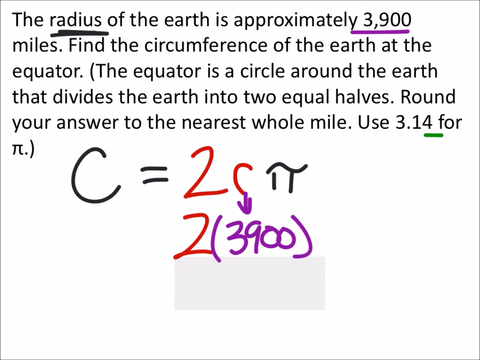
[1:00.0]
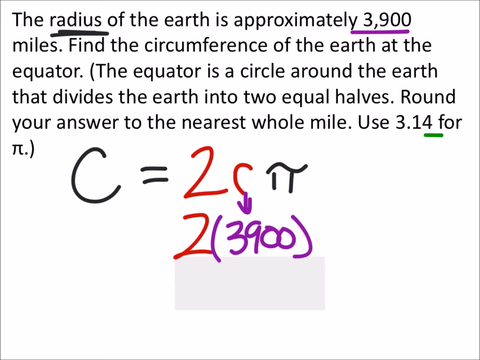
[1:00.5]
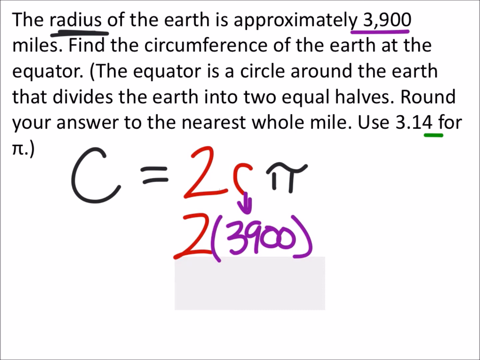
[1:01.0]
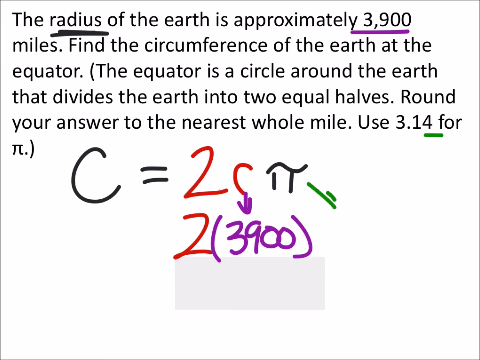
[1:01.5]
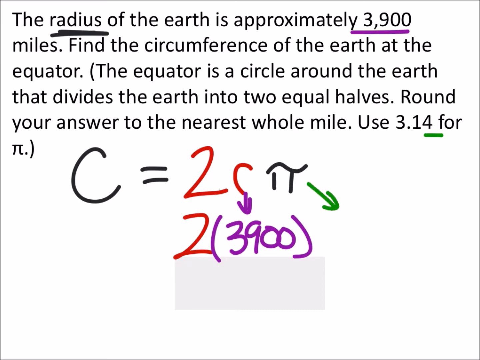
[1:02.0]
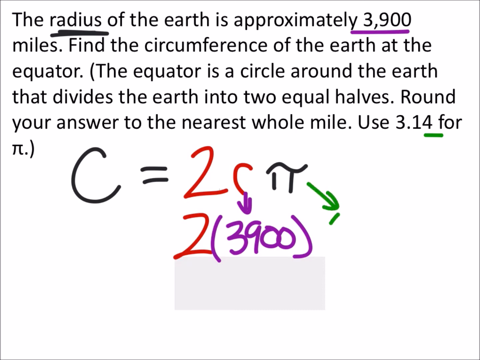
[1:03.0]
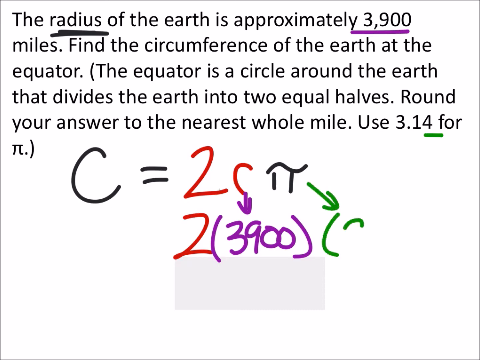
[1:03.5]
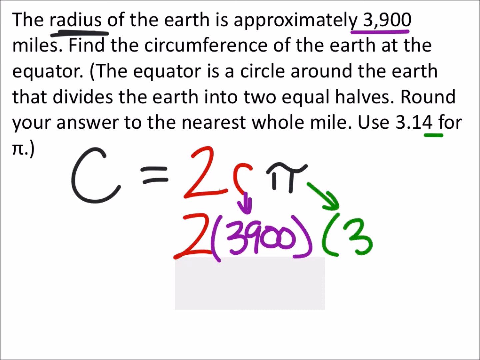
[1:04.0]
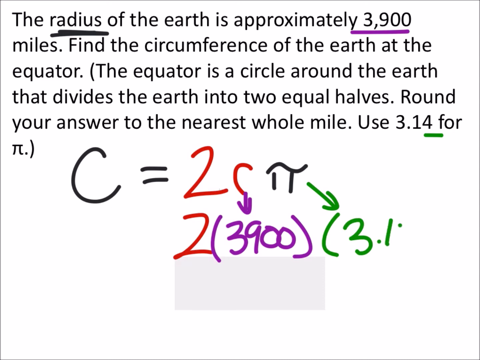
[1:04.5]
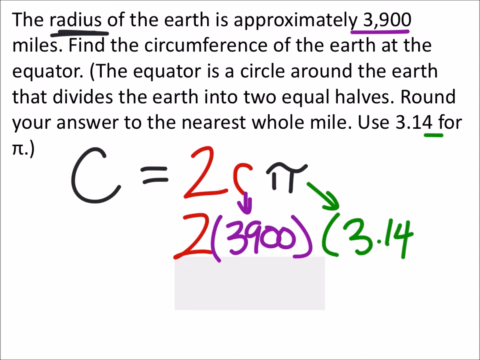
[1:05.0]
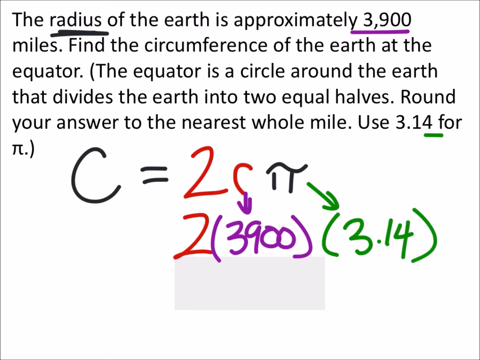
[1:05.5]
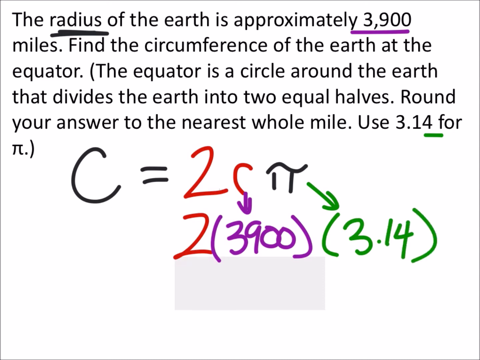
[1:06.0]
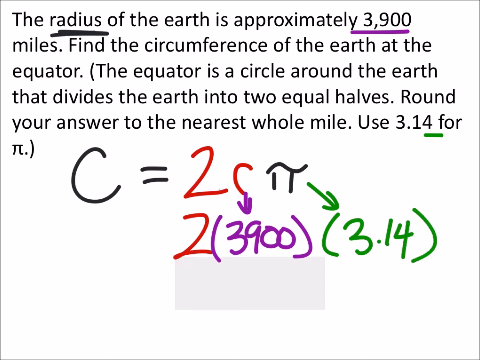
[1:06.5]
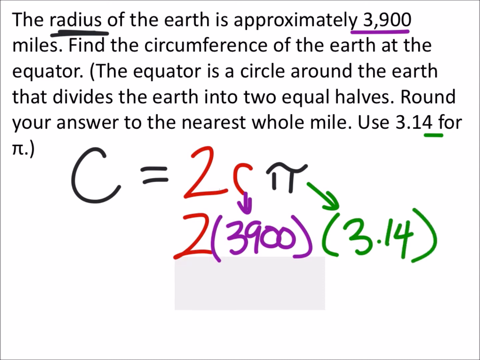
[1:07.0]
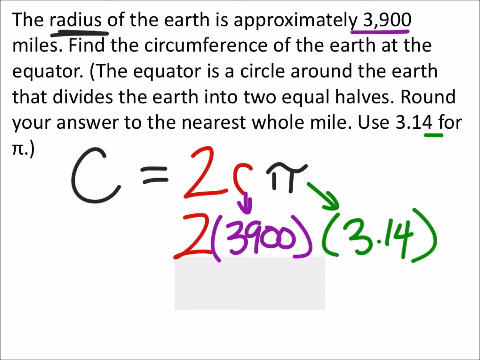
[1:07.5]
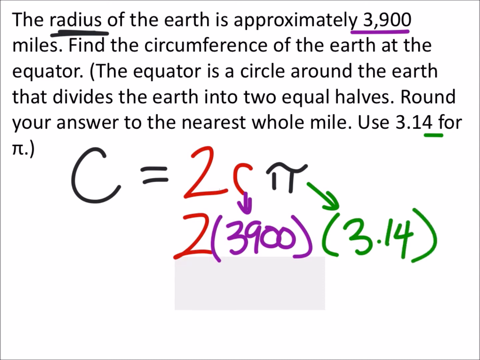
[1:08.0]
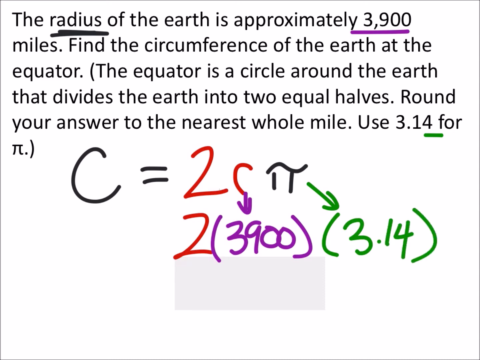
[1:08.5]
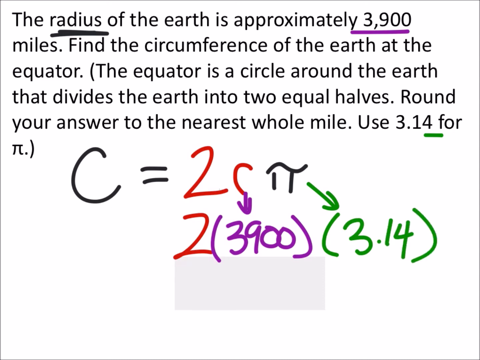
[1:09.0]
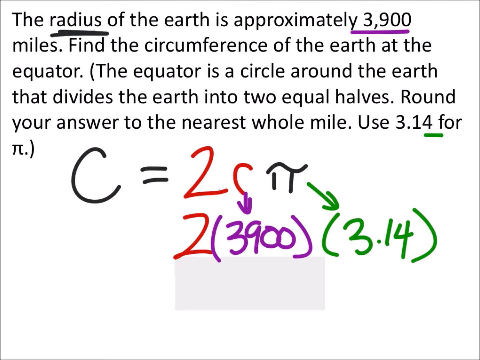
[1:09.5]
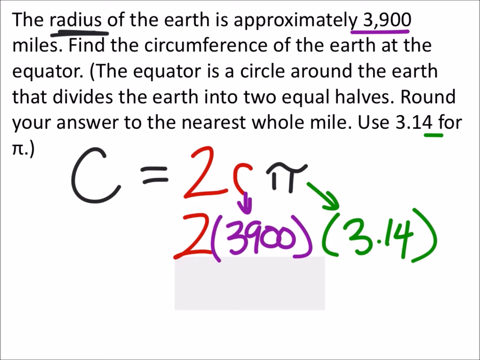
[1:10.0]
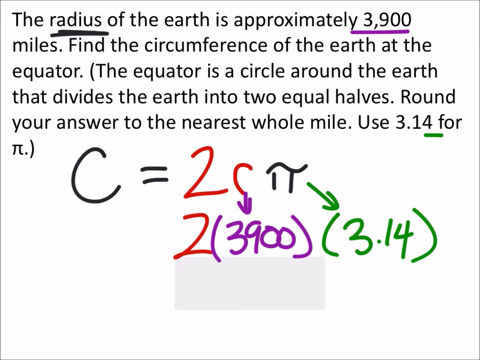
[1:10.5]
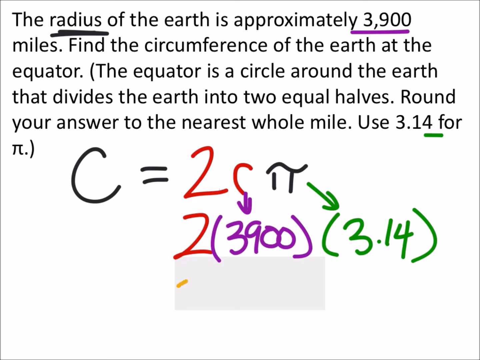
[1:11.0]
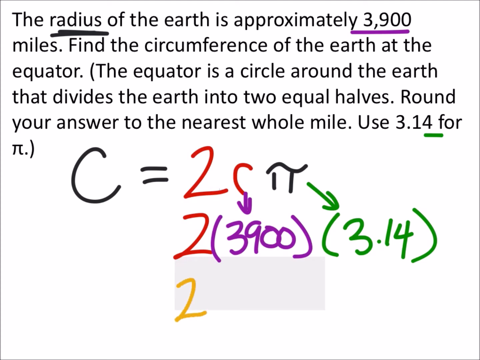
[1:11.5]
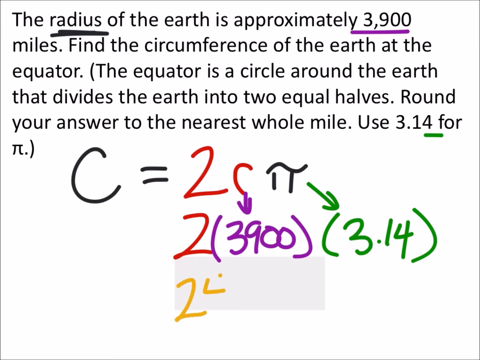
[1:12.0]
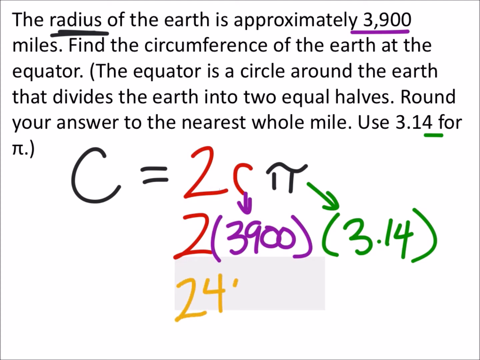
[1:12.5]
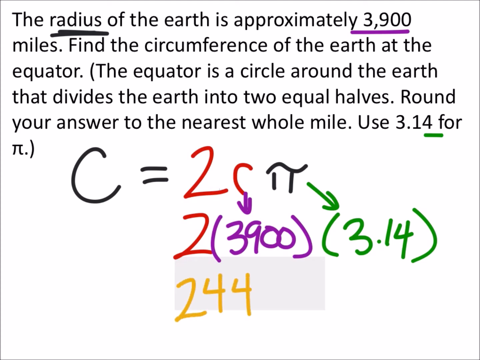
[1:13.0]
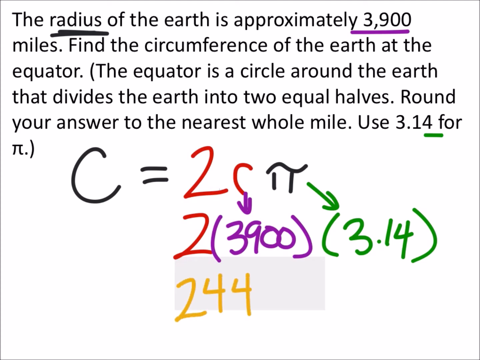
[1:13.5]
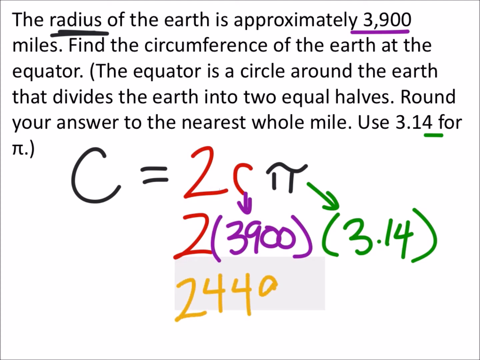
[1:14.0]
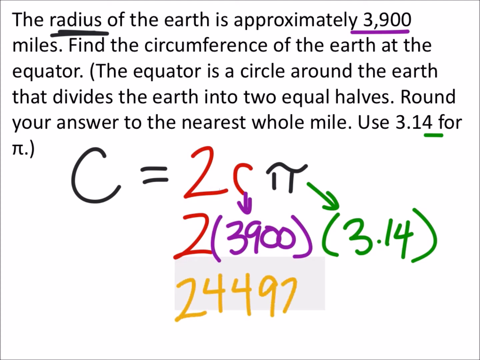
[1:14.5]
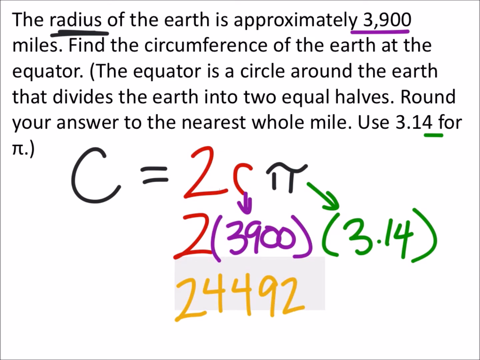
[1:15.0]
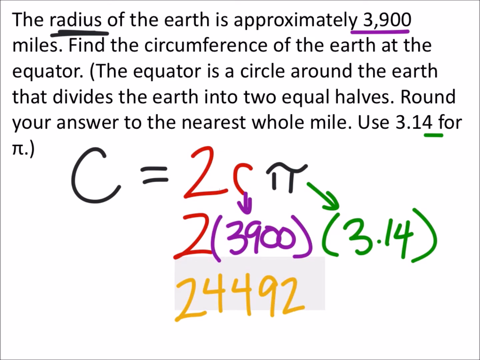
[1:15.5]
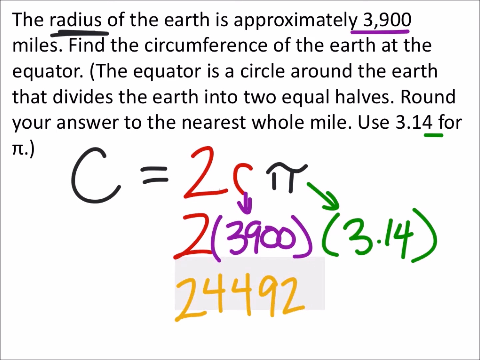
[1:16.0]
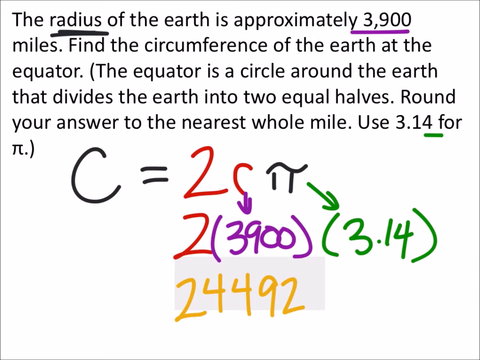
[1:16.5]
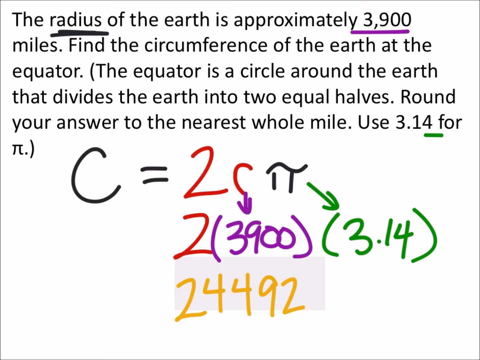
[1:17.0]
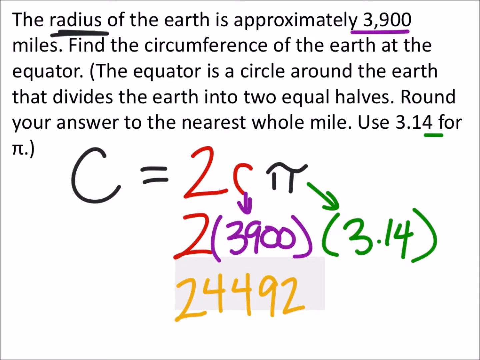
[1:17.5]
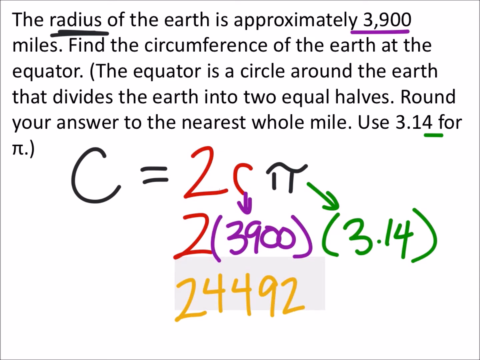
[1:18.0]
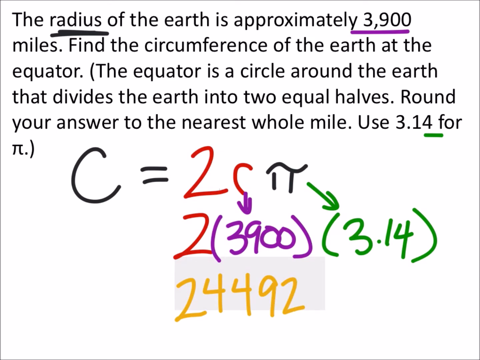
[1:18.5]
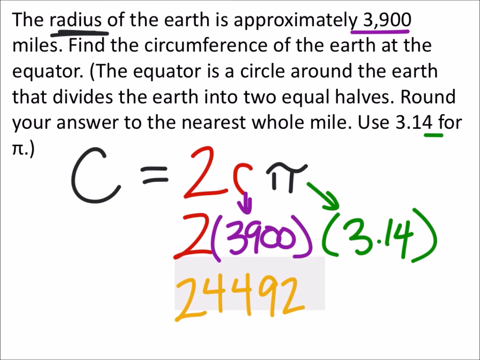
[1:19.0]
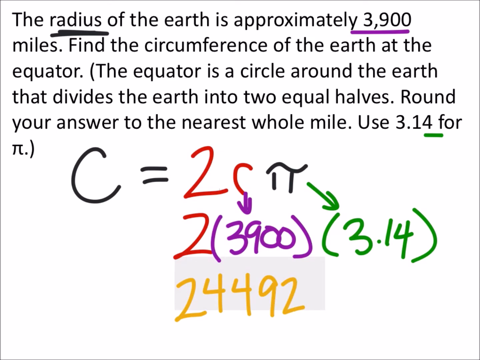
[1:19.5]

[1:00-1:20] On a white background, in what might be a math class, black text at the top of the screen reads: "The radius of the Earth is approximately 3,900 miles. Find the circumference of the Earth at the equator. The equator is a circle around the Earth that divides the Earth into two equal halves. Round your answer to the nearest whole mile. Use 3.14 for pi." Below, "C equals 2C pi" is handwritten: the C and the equal sign appear in black handwriting, and to the right, in red, it reads 2C, followed by pi. A small purple arrow appears, and below that the number 2 and, in parentheses in purple, 3,900. A student is working out the problem.